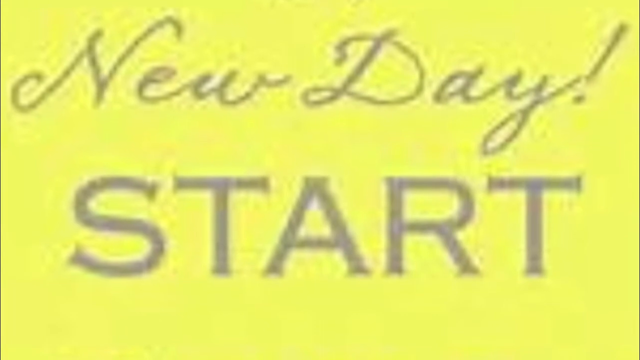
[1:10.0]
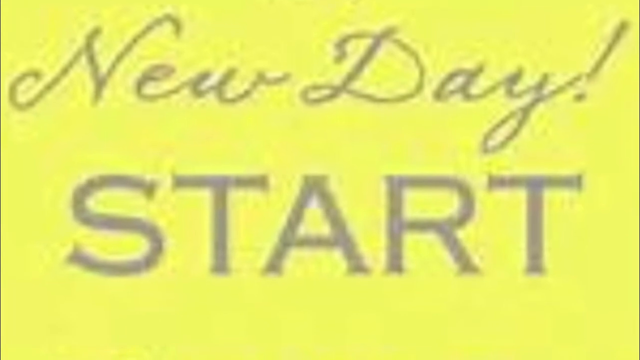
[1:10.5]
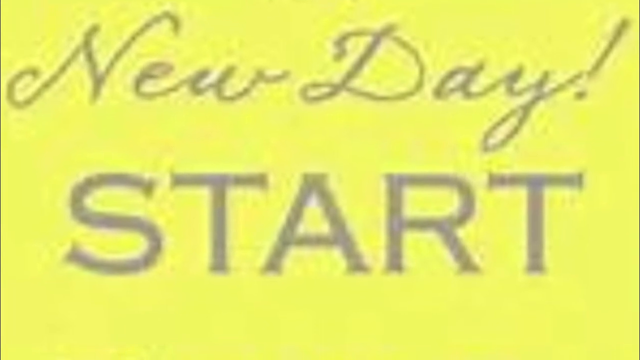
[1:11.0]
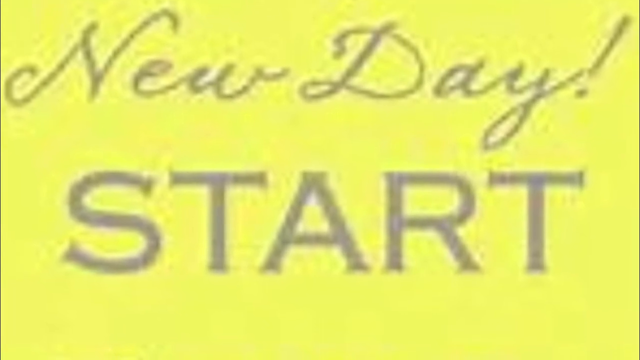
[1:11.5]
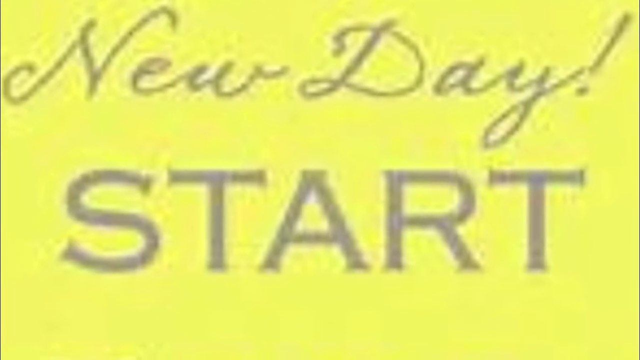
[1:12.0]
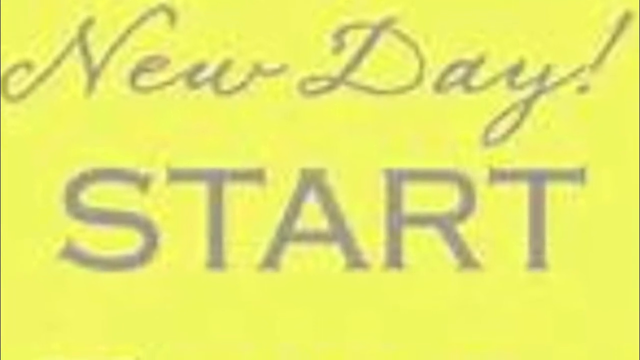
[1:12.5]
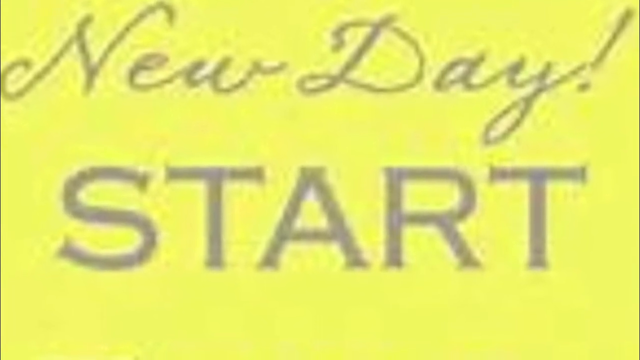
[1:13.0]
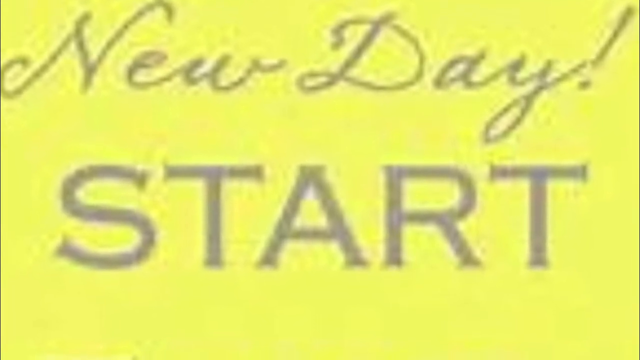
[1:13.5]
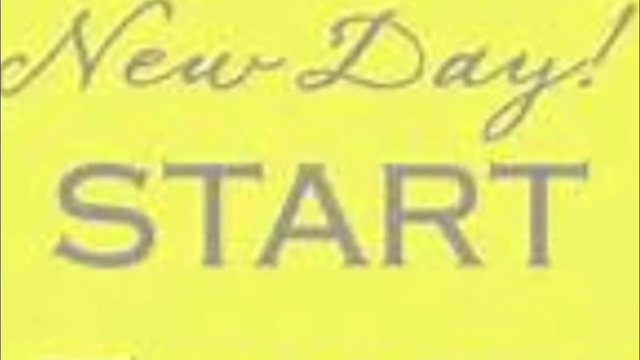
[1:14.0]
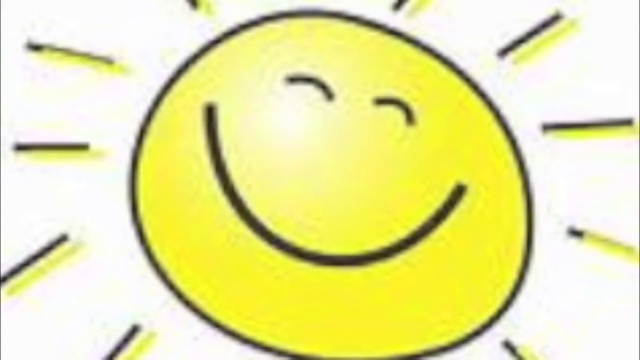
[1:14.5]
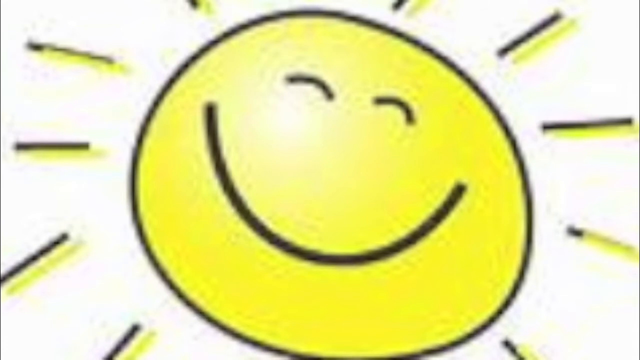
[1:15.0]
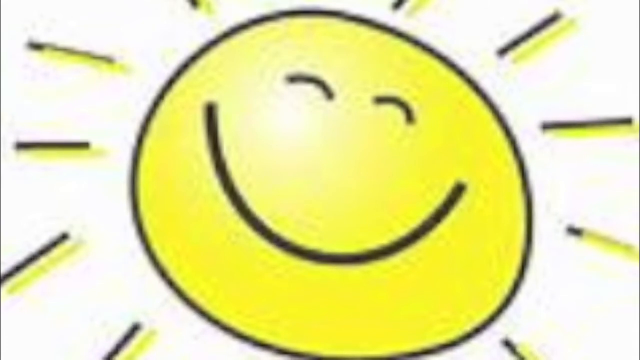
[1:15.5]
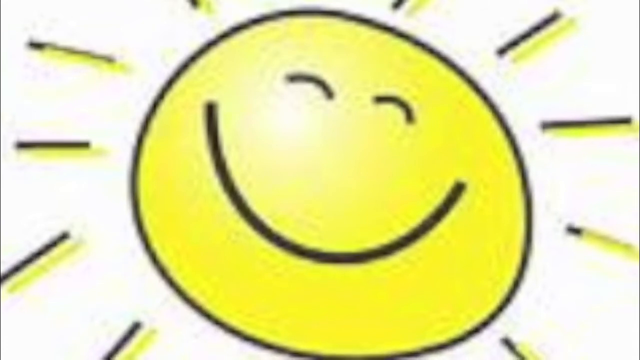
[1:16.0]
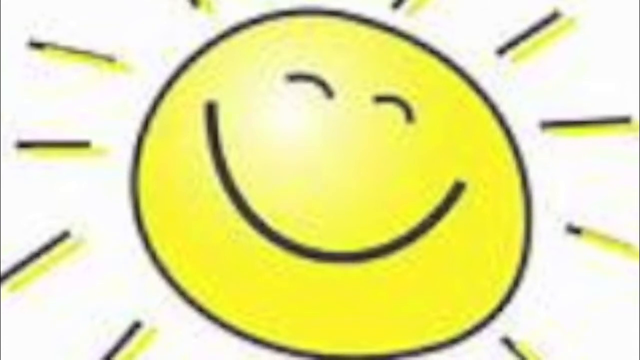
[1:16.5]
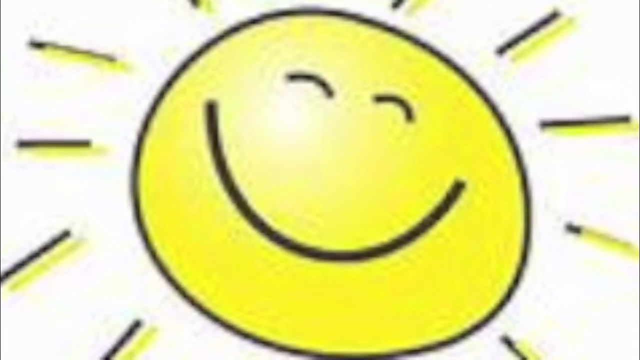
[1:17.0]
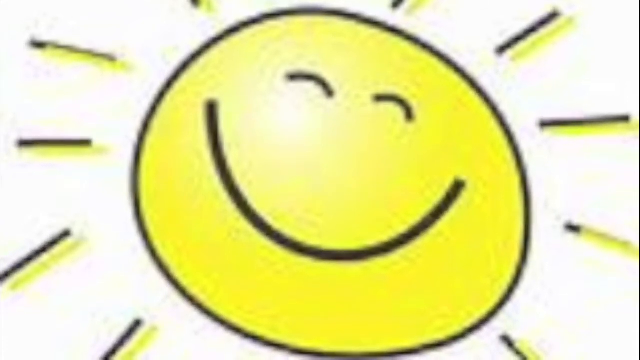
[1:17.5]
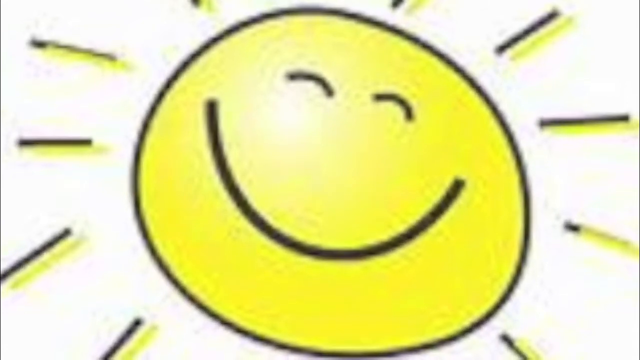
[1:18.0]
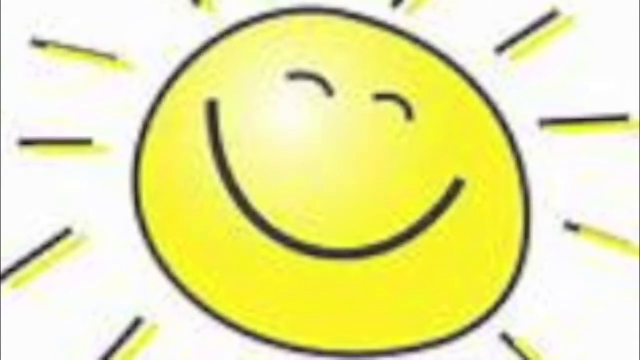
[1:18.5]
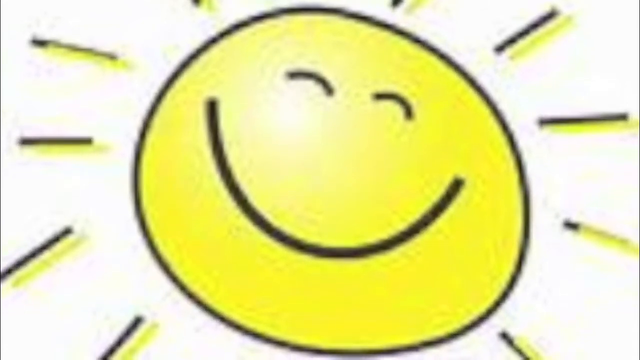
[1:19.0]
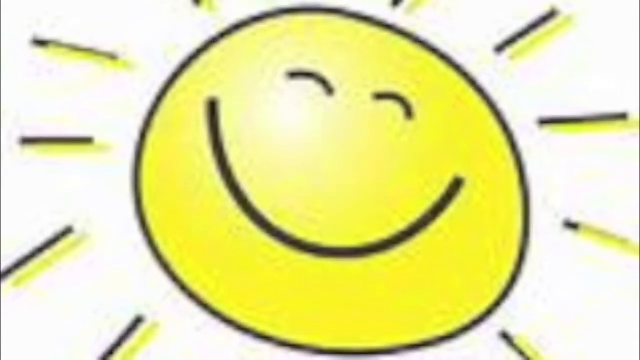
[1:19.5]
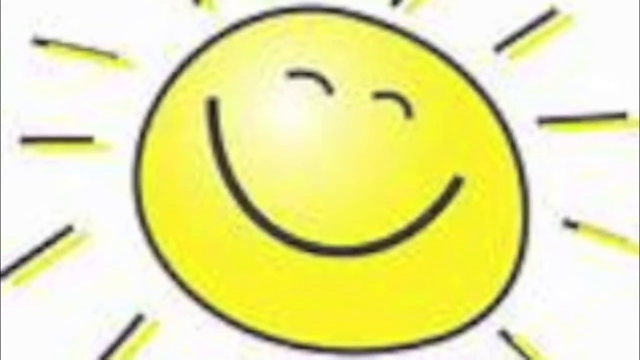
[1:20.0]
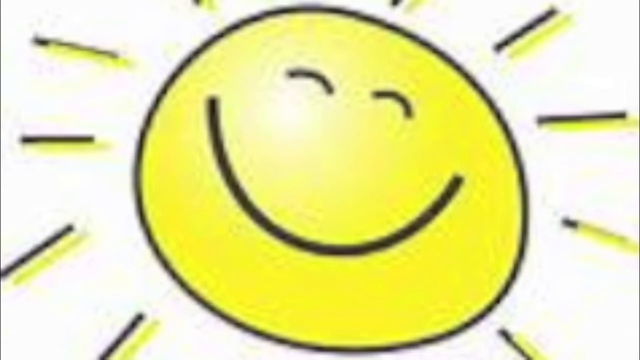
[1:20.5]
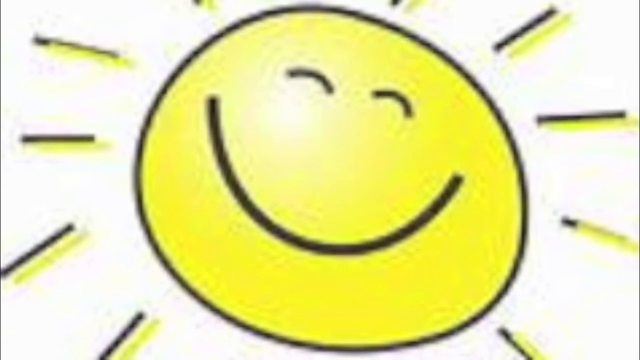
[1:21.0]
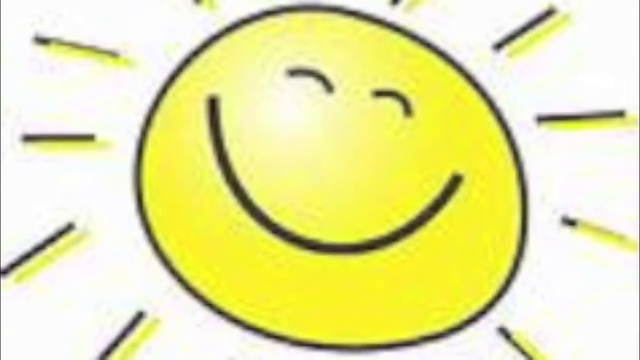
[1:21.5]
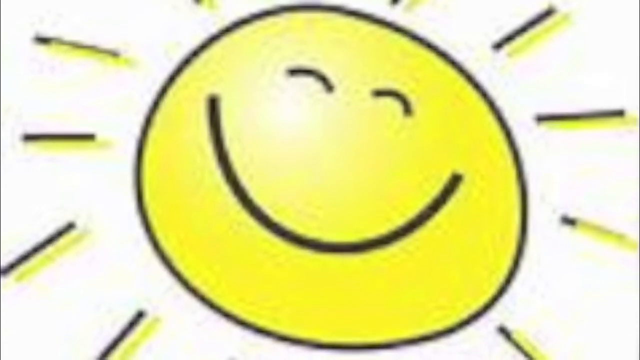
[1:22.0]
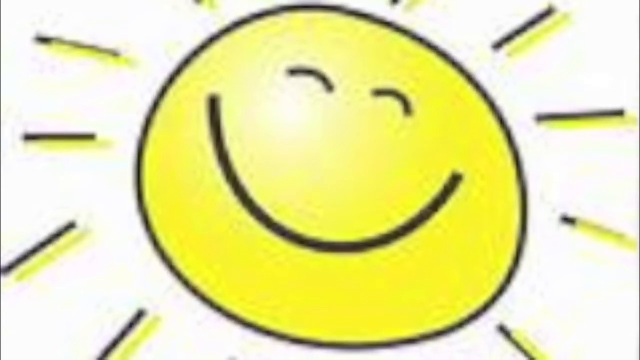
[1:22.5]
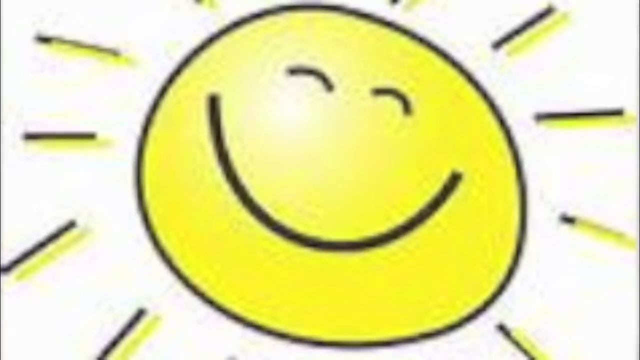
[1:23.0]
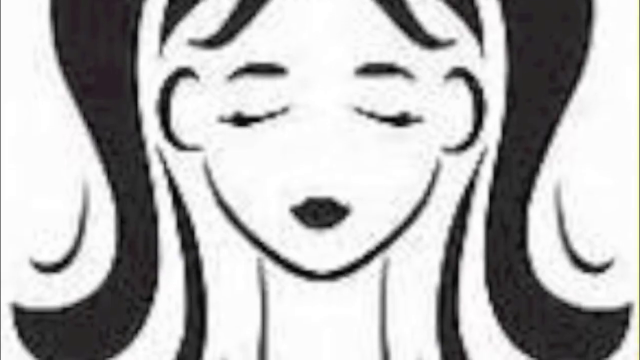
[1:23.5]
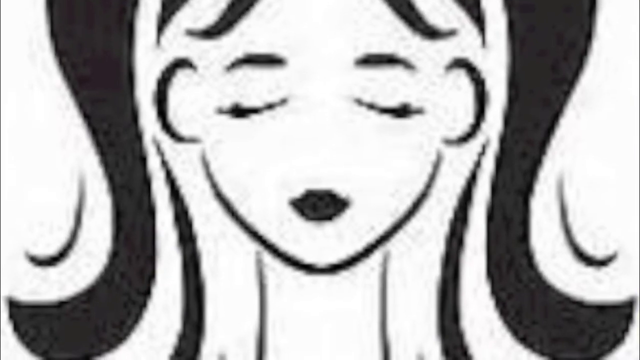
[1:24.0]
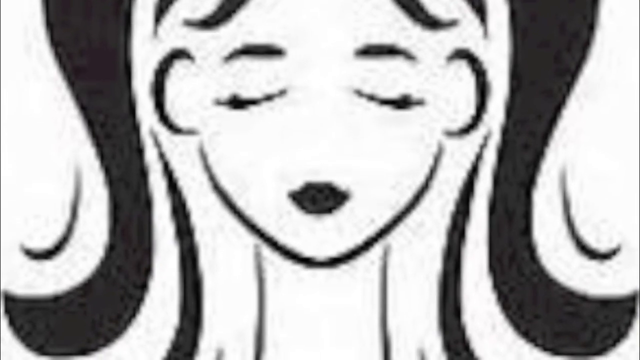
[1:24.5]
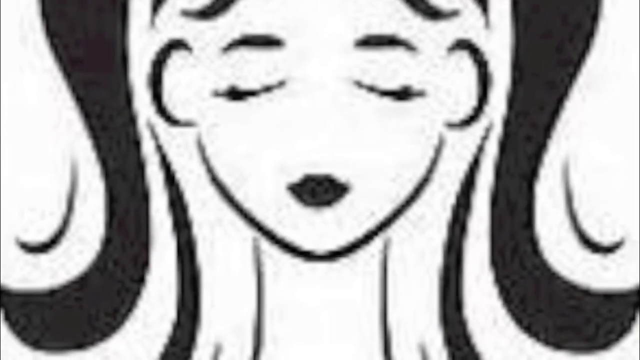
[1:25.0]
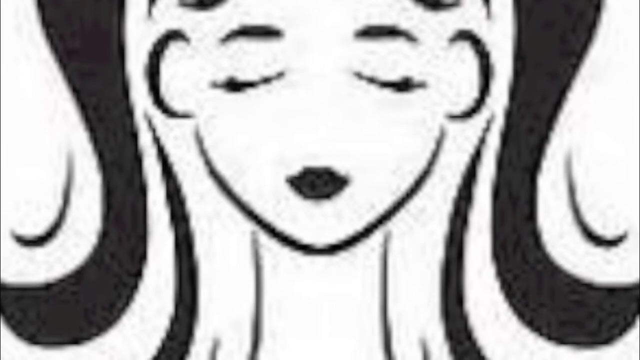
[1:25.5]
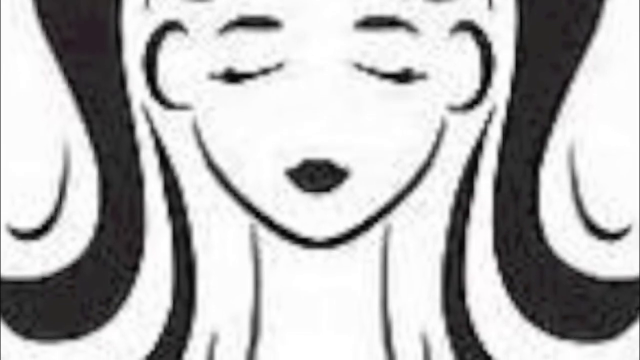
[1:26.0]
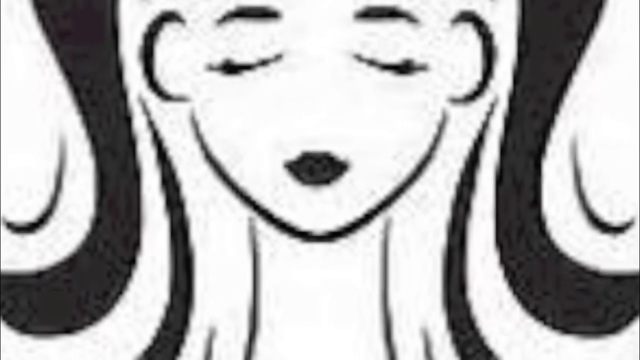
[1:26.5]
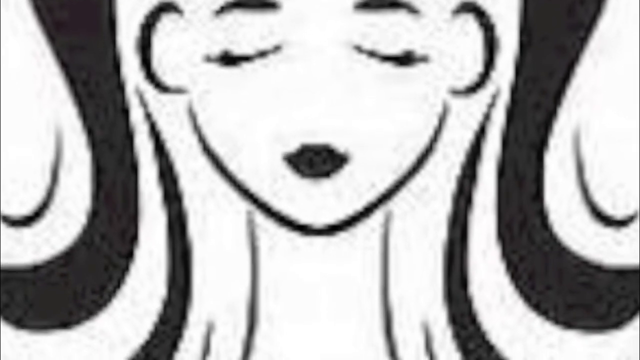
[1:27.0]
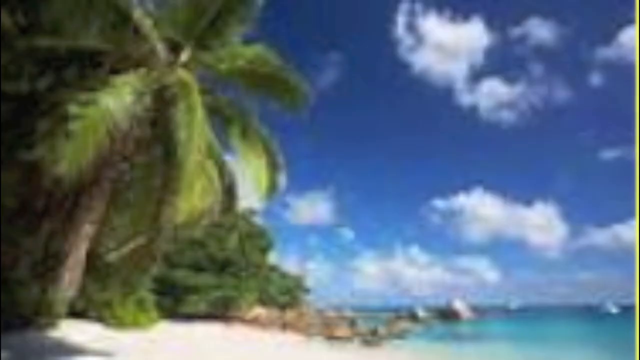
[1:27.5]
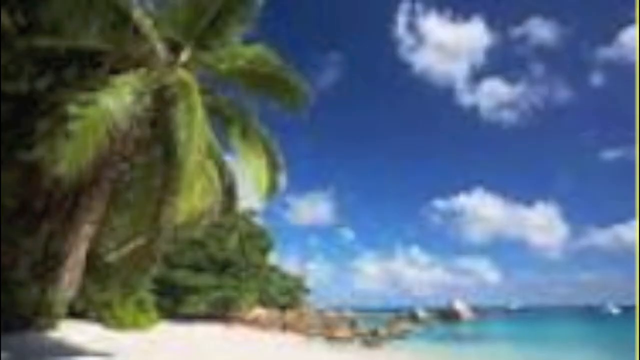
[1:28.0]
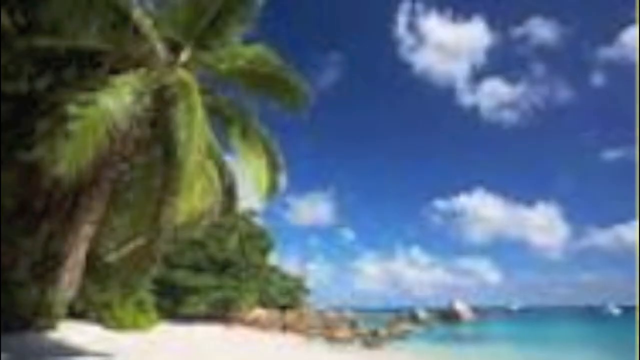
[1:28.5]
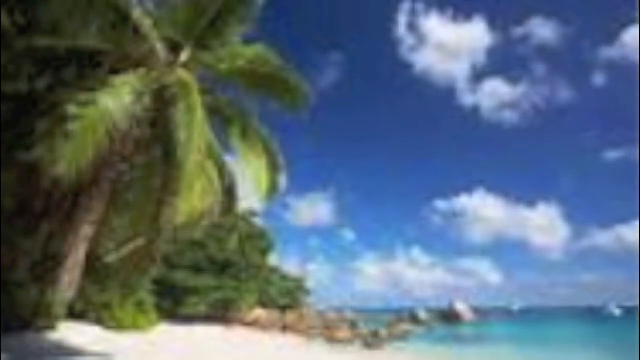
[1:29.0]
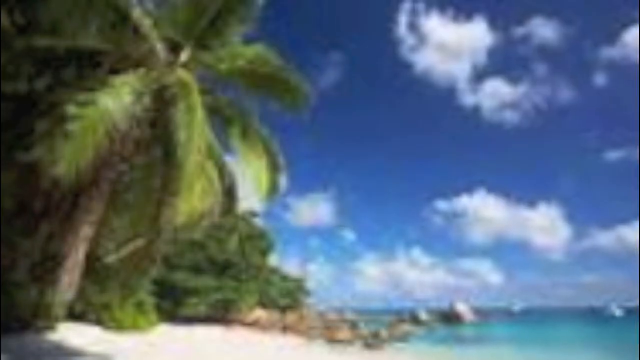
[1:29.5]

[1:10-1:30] After the "new day start" screen, a drawing of a sun appears that looks like a children's drawing: the sun is yellow with black outlines, has a smiley face, and has rays of sunshine coming out of it. The view slowly zooms out. Next comes another black-and-white illustration, of a woman's face and head, and then a photo of a tropical beach. The graphics appear pixelated and low quality.